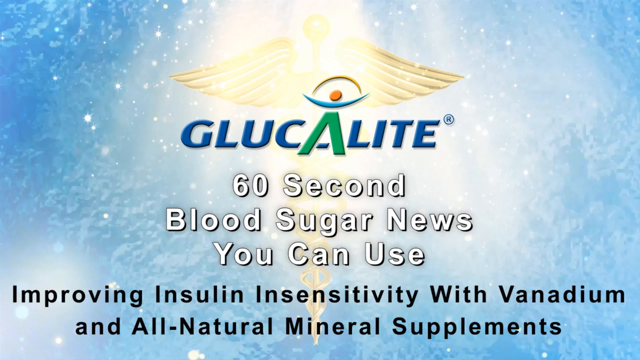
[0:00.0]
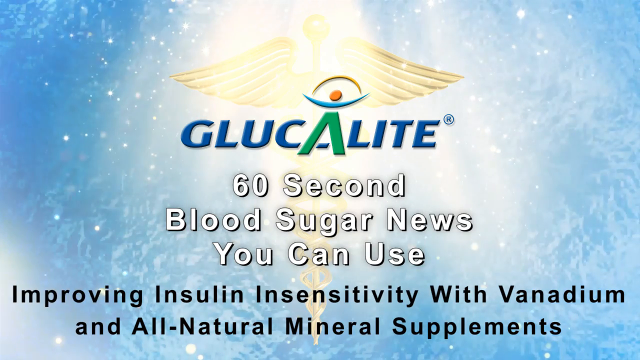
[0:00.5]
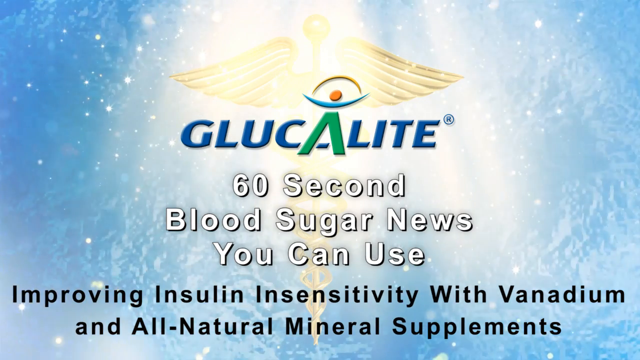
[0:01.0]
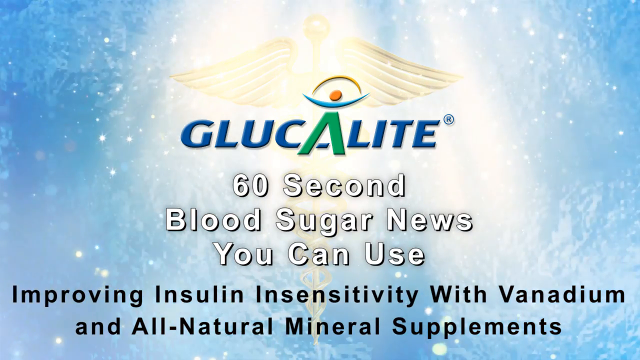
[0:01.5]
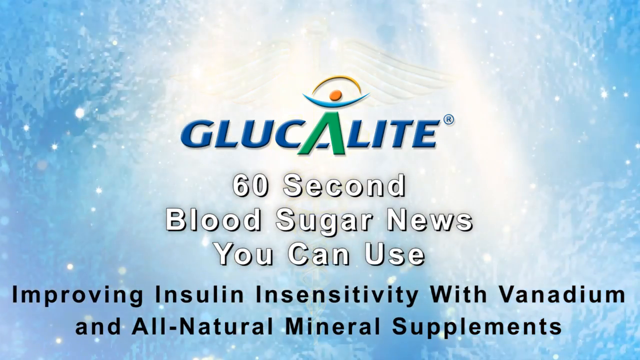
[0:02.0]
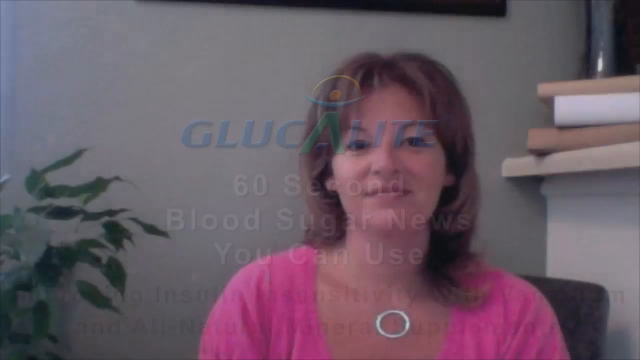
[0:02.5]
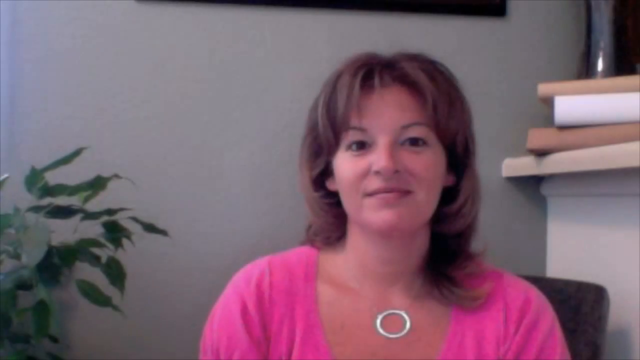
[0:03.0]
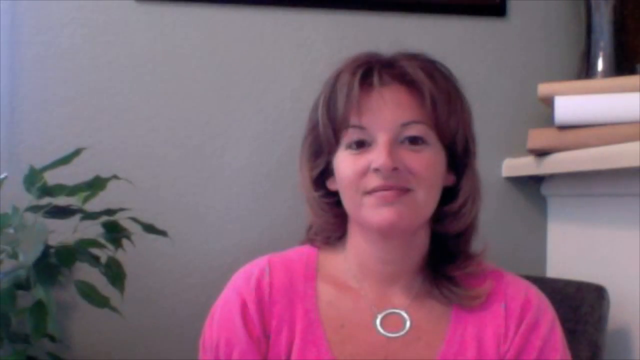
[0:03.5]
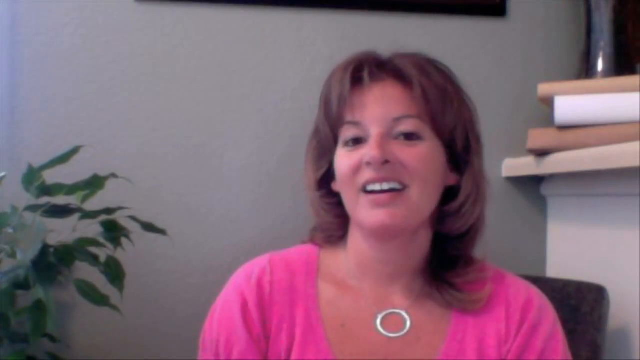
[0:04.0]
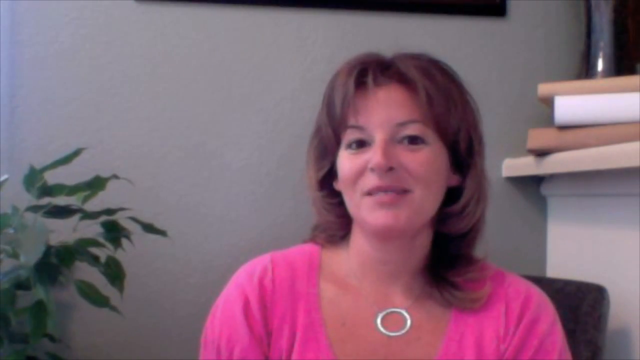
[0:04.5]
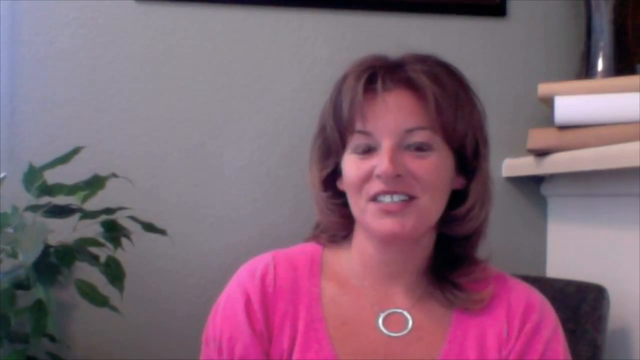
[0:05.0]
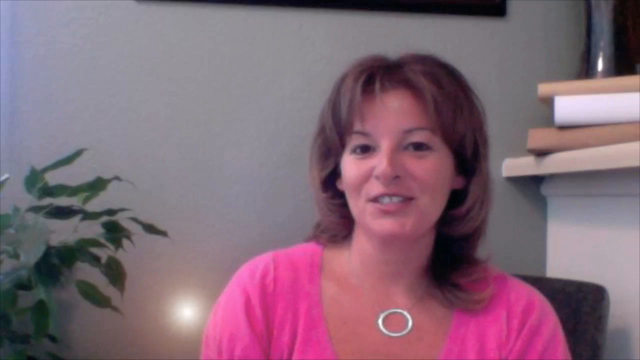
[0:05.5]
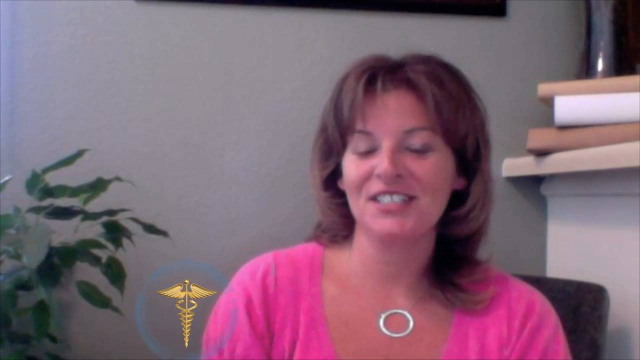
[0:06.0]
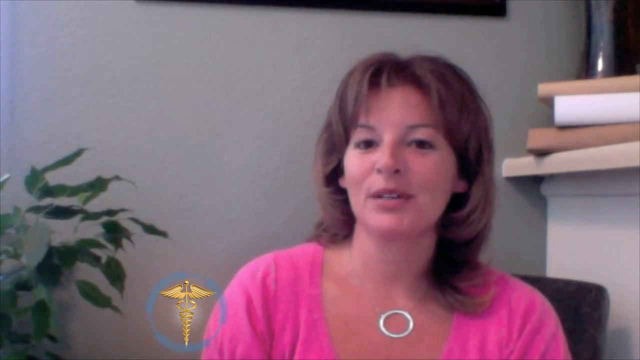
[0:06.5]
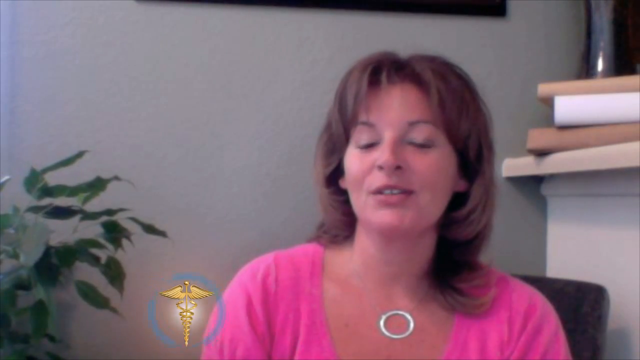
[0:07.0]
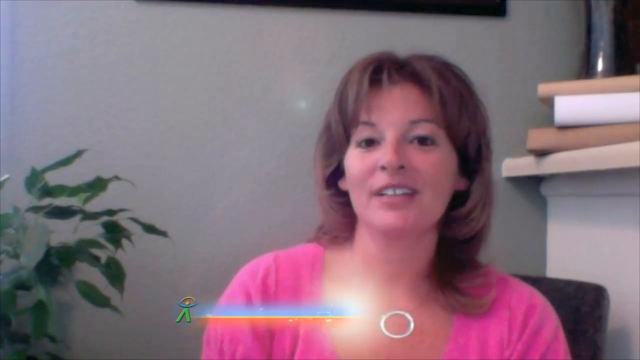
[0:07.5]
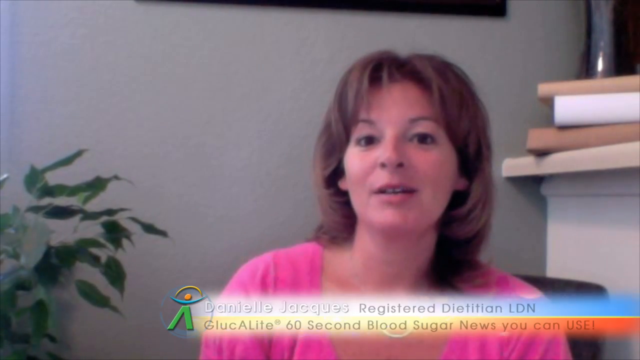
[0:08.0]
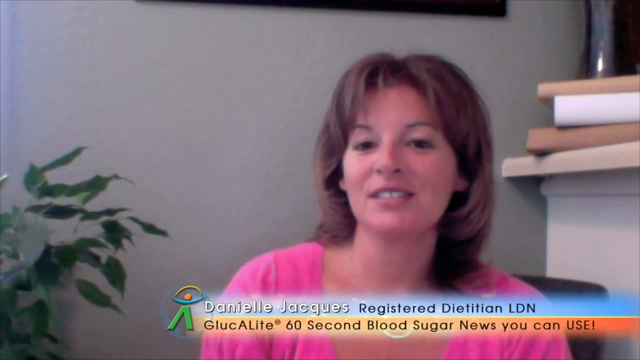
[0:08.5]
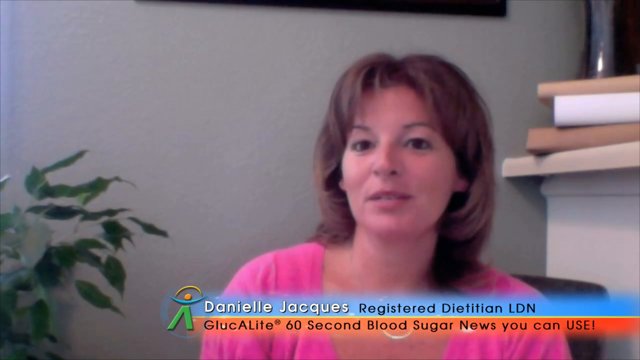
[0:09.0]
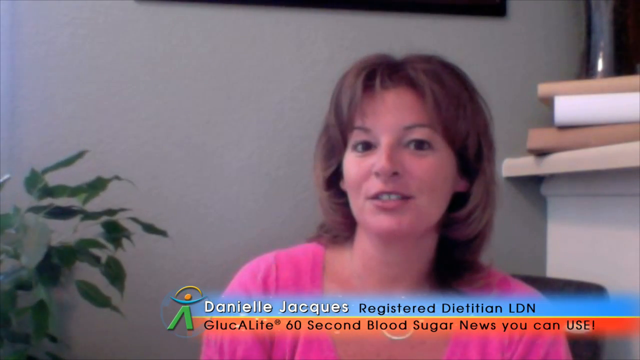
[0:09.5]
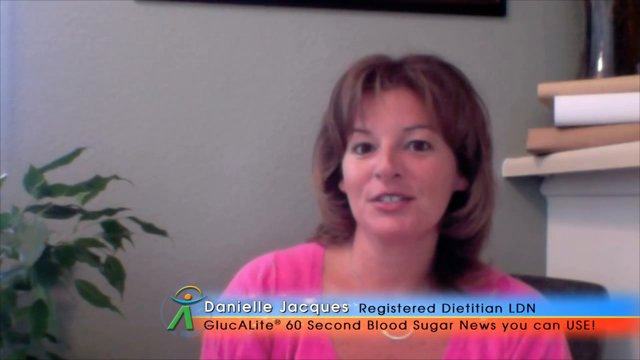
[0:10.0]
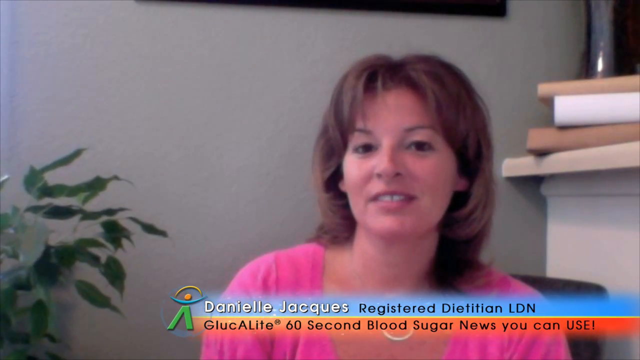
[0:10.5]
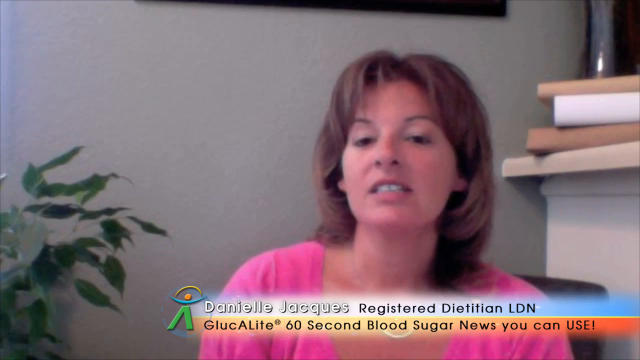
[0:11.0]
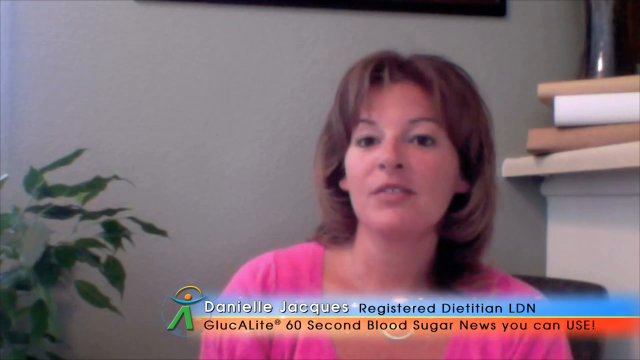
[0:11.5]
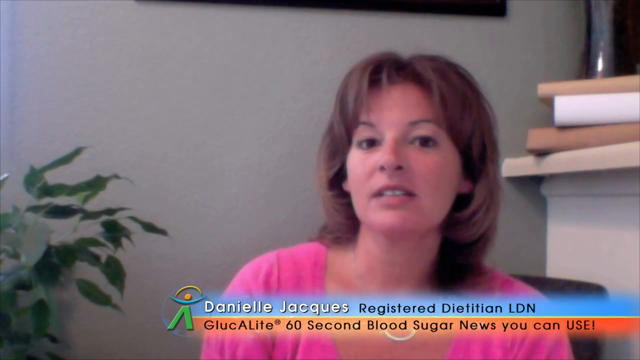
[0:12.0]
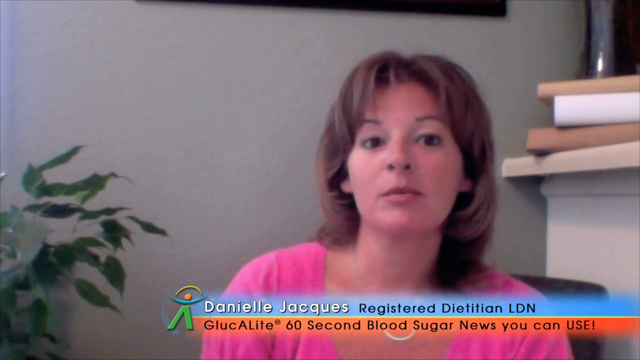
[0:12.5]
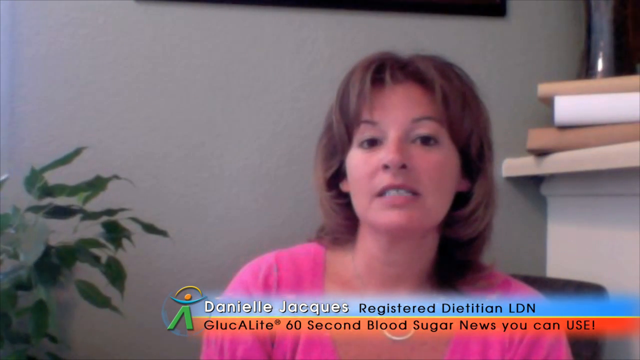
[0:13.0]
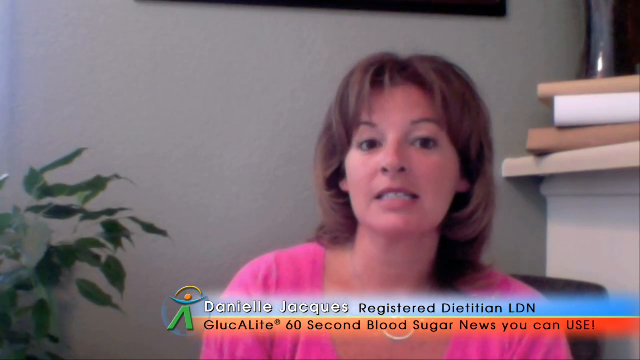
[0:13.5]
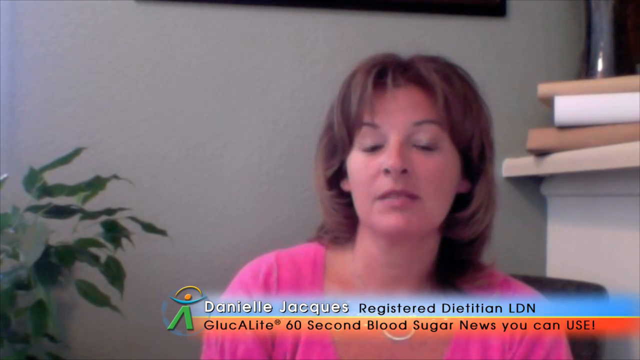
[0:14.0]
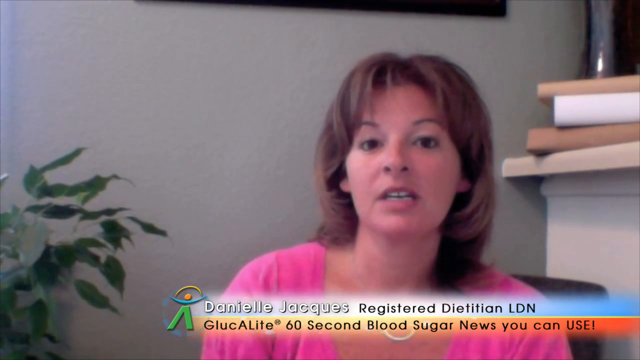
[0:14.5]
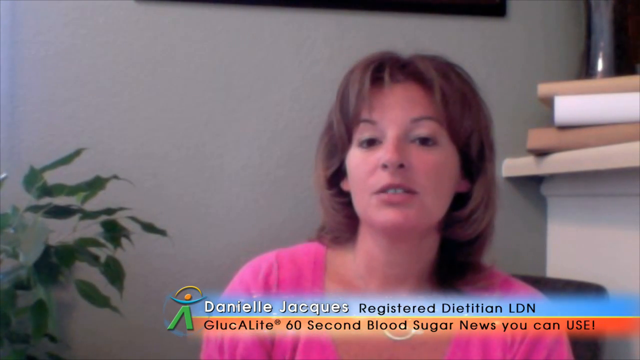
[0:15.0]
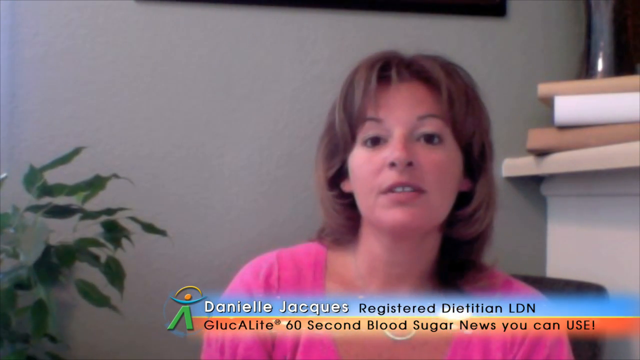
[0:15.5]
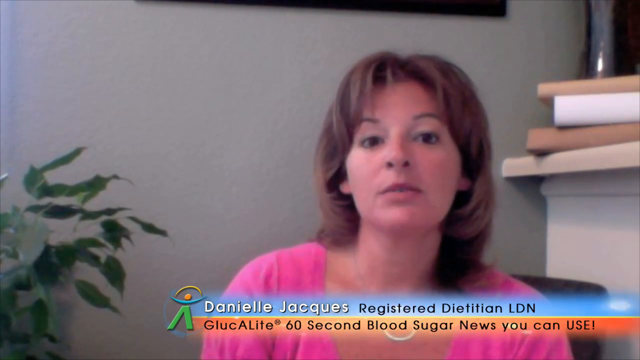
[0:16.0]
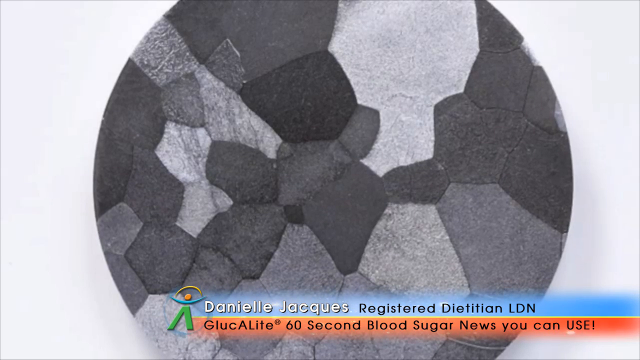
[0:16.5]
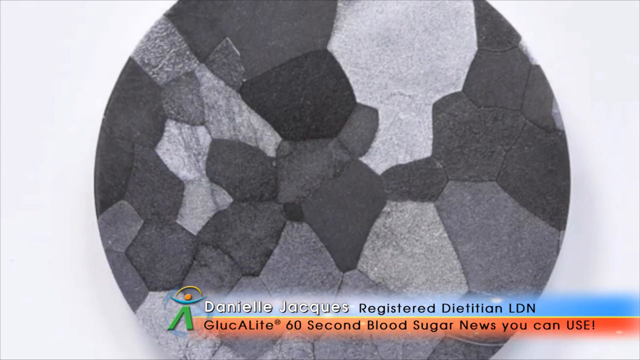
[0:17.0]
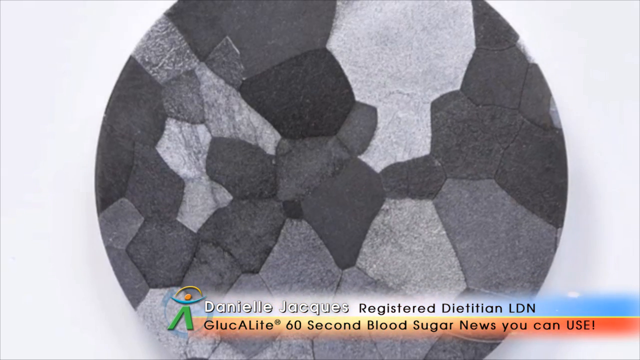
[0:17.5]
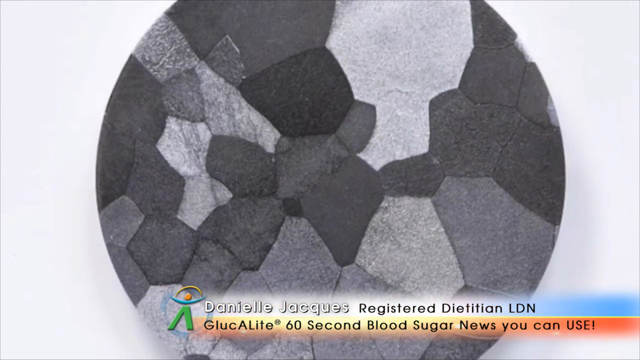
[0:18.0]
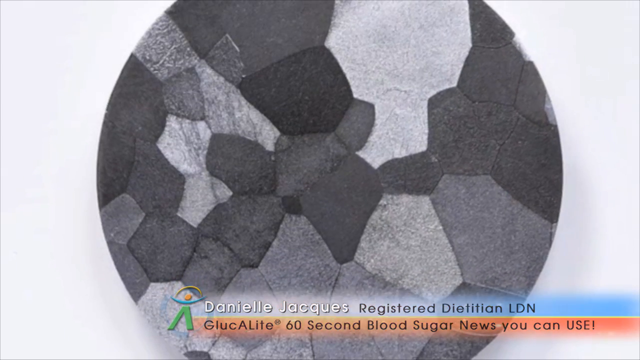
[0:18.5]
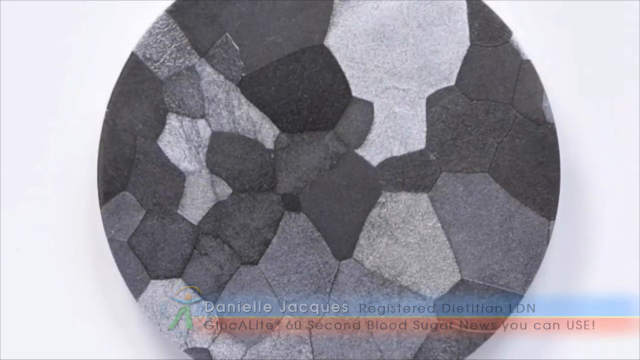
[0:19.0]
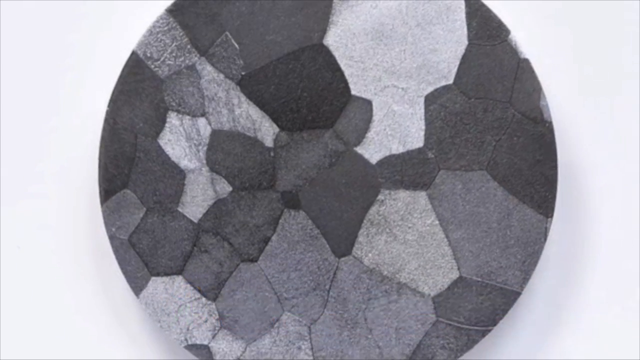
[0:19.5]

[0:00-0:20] The video opens on the Glucolate logo. Most of the letters are blue, but the A is green and looks like a formed, twisted person: the green A makes the legs, above it a swish forms arms, there is an orange head, and between the arms, going over the head, is what looks somewhat like a yellow halo or an arc running between the hands. Behind it the text reads "Glucolate 60 second blood sugar news you can use" in white letters, and under that is black text beginning "improving insulin insensitivity with" that mentions an all natural mineral supplement. Behind the logo is a medical symbol with wings, and it looks like light is shining down on it. Then a woman with brown hair and a pink shirt appears. She appears to be sitting in a corner, with a shelf holding a couple of books on her right-hand side, a plant, and what seems to be a picture frame above her. She appears to be talking. The medical symbol comes up off center to the left, then turns into the A symbol of the brand, with the text "Daniel Jackie's registered dietitian" and "Glucolate 60 second blood sugar news." Next comes a circular black-and-white picture containing what looks like layered pieces, apparently of a cell, in monochromatic tones: white around it and various shades of gray. It moves quickly, and the number of small pieces in the circle cannot be counted.